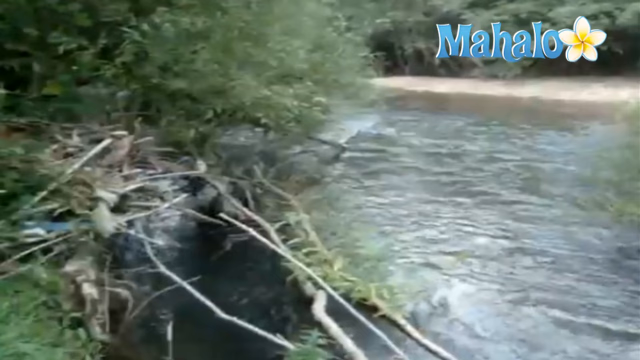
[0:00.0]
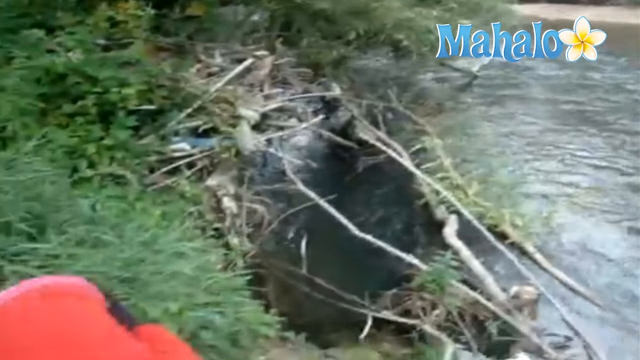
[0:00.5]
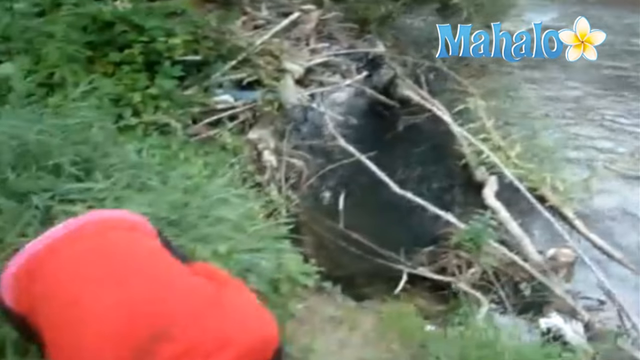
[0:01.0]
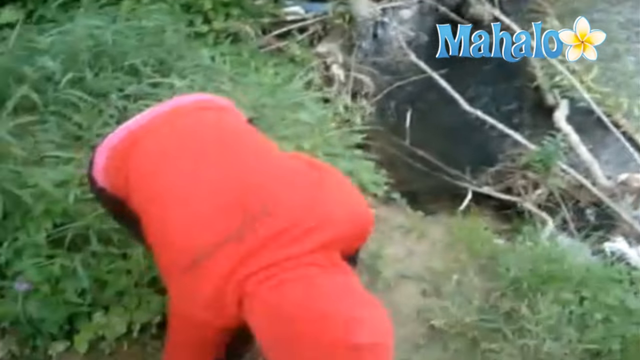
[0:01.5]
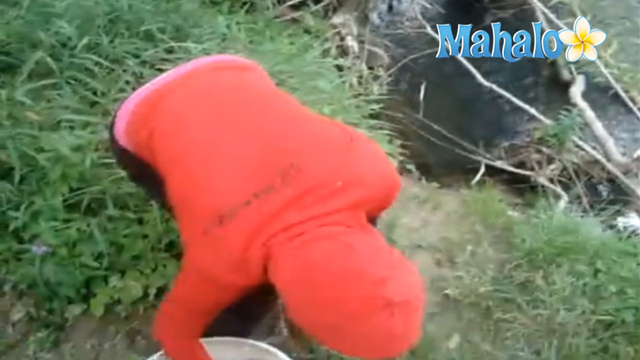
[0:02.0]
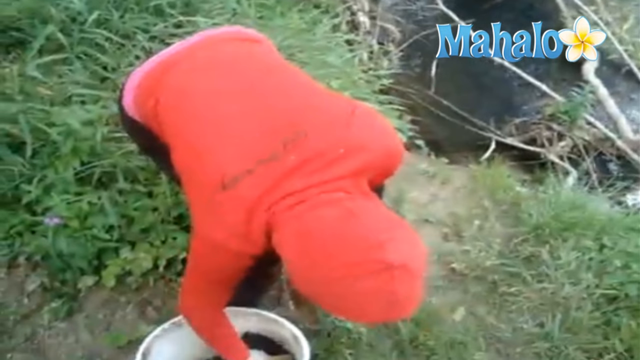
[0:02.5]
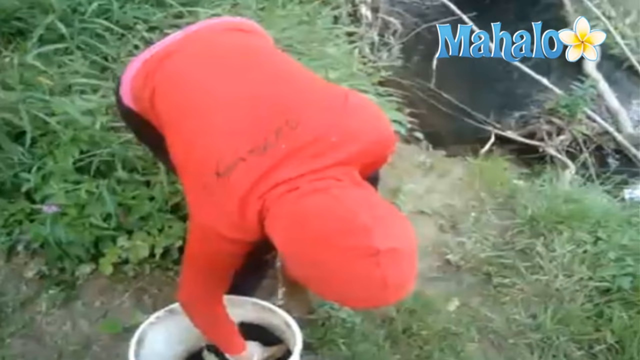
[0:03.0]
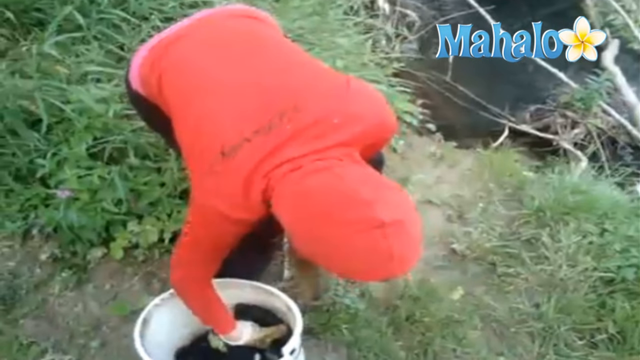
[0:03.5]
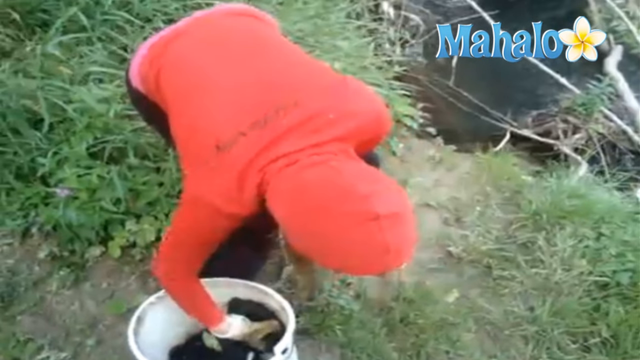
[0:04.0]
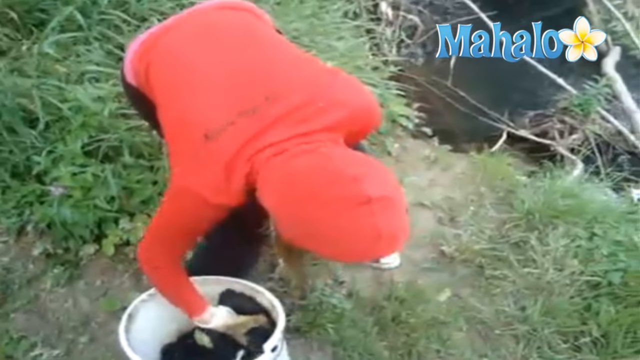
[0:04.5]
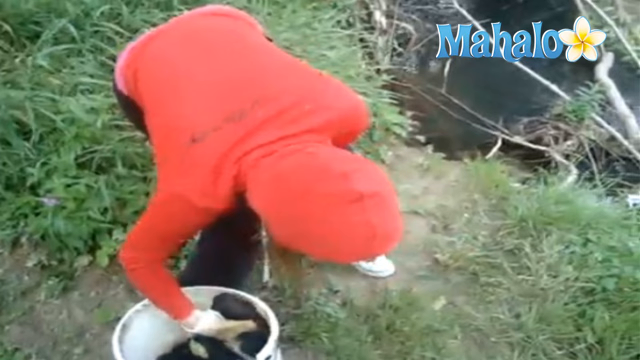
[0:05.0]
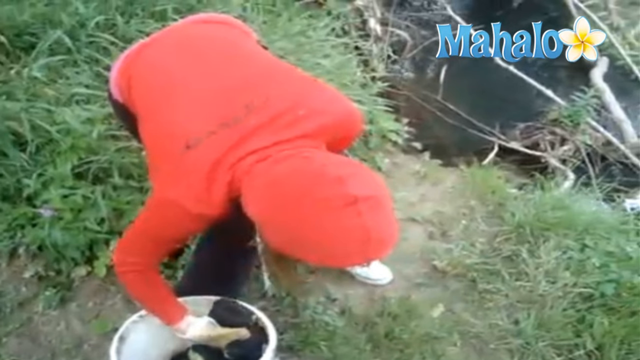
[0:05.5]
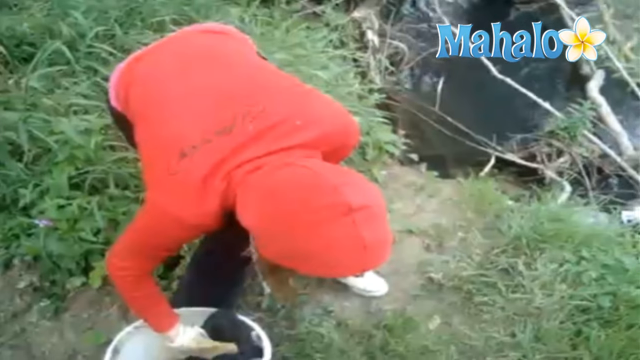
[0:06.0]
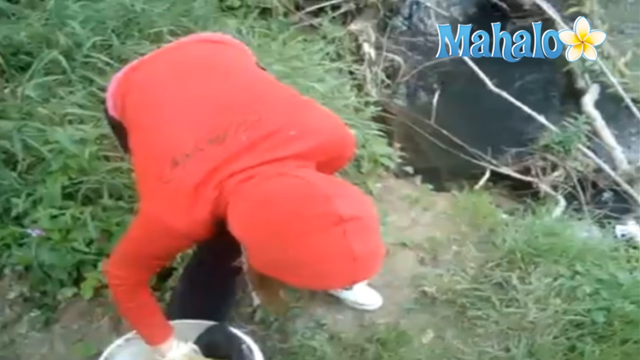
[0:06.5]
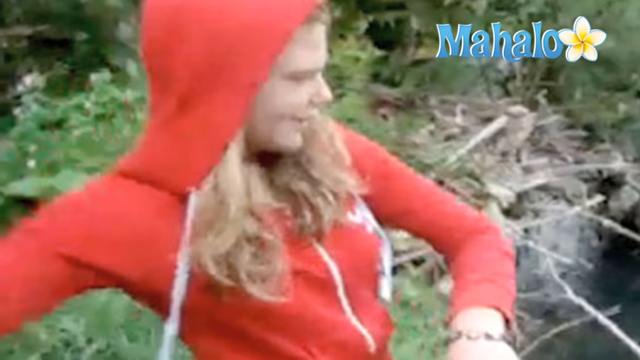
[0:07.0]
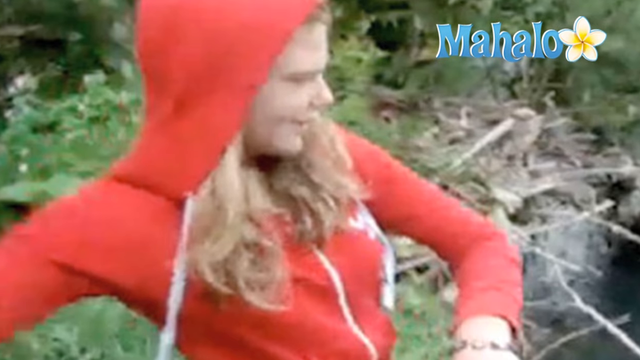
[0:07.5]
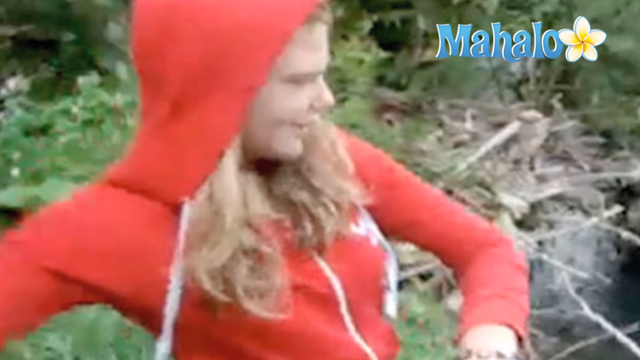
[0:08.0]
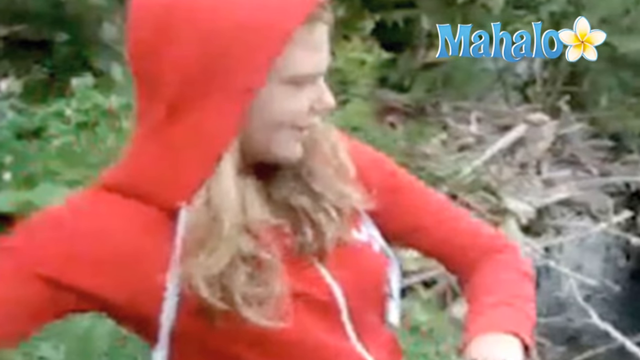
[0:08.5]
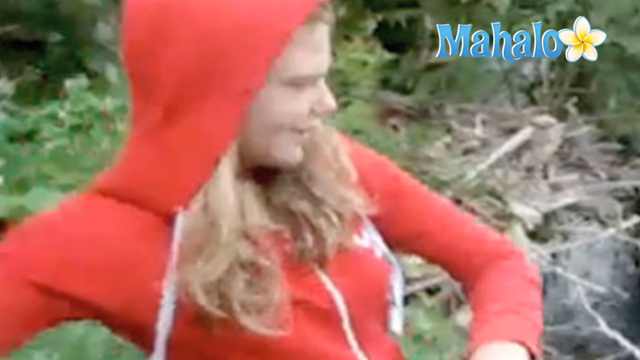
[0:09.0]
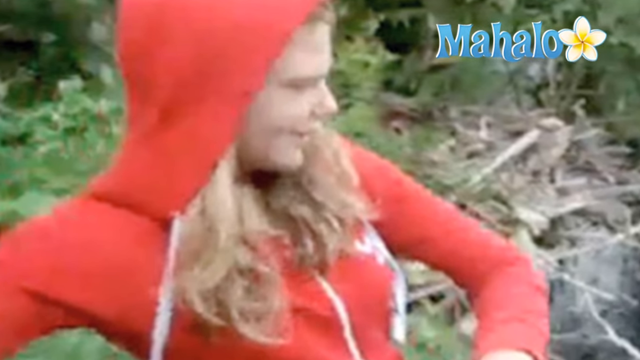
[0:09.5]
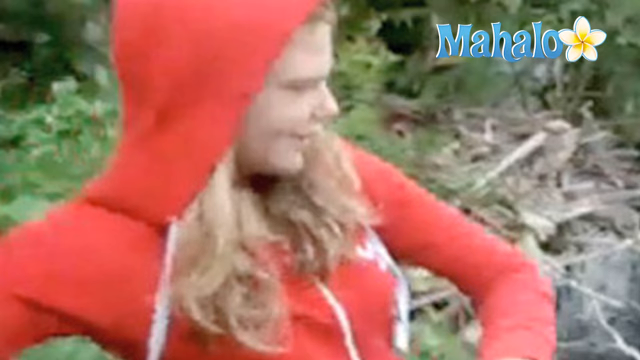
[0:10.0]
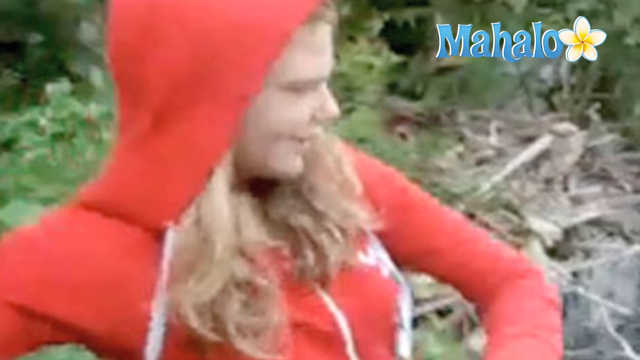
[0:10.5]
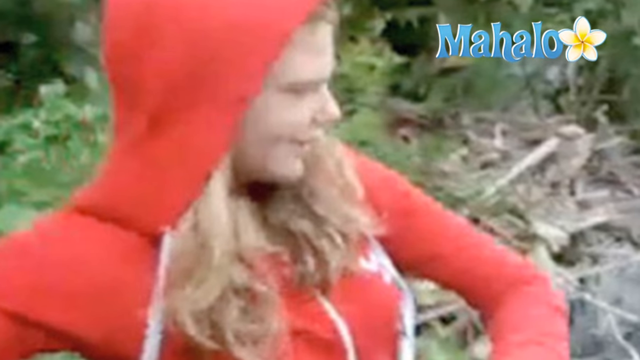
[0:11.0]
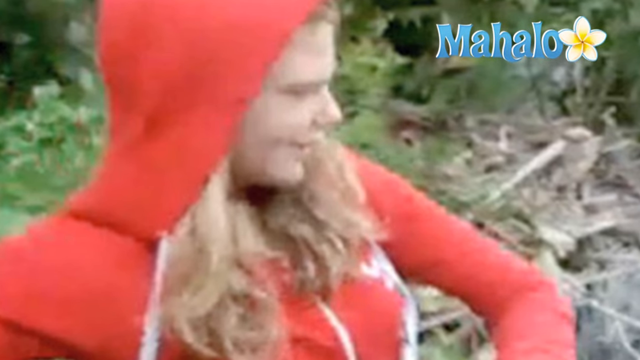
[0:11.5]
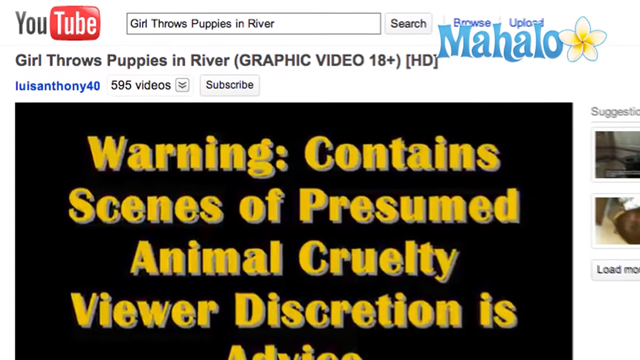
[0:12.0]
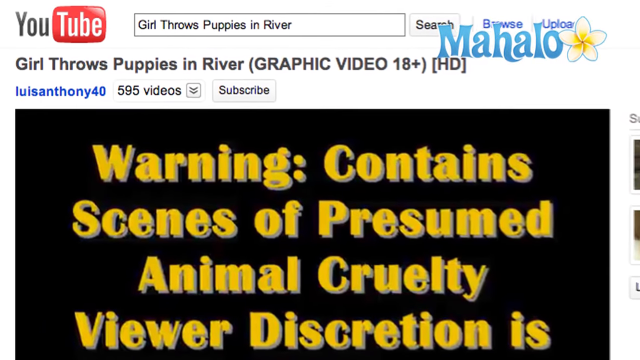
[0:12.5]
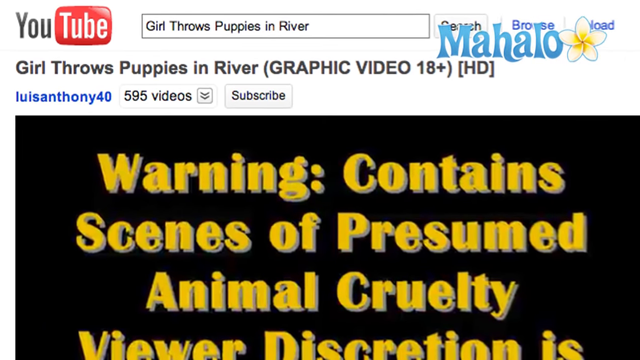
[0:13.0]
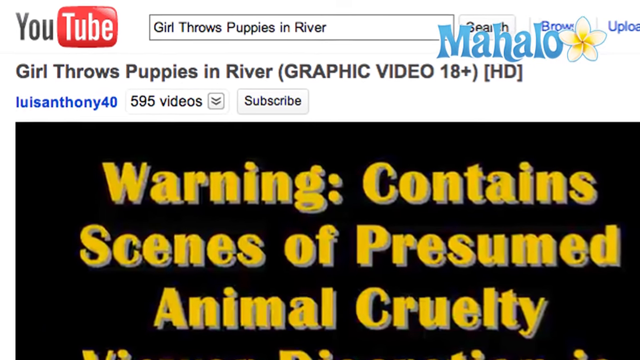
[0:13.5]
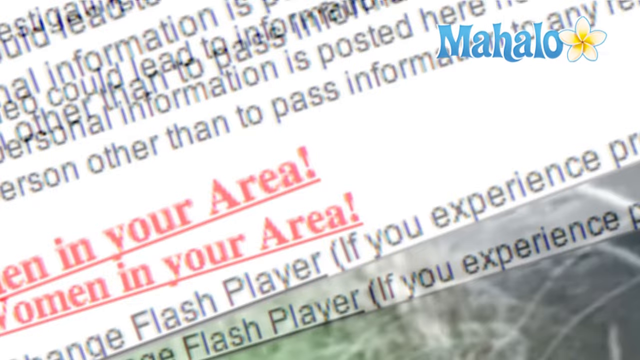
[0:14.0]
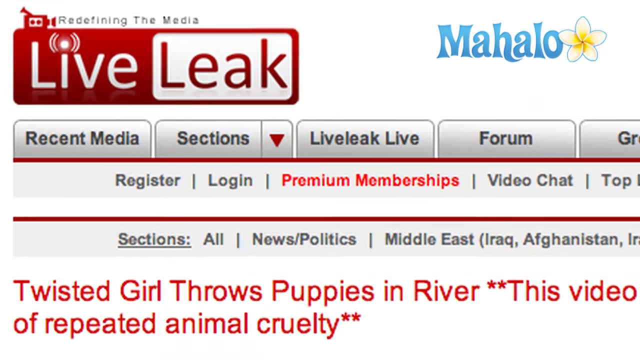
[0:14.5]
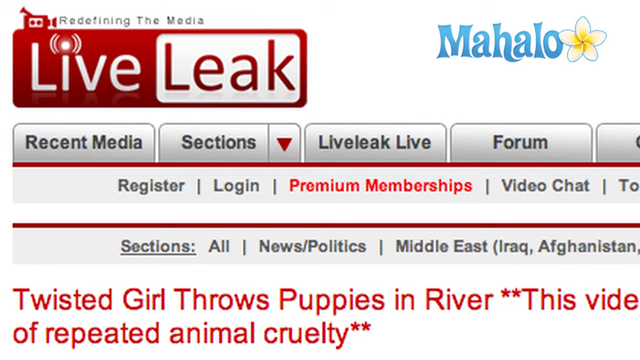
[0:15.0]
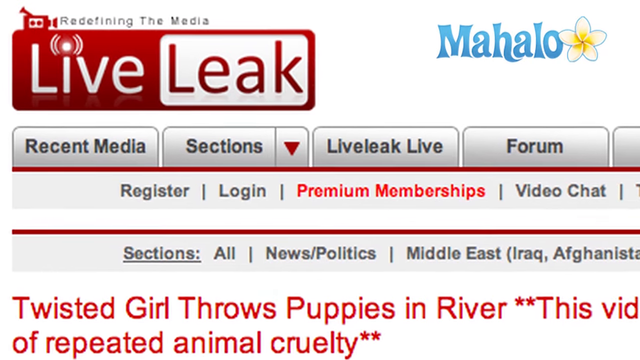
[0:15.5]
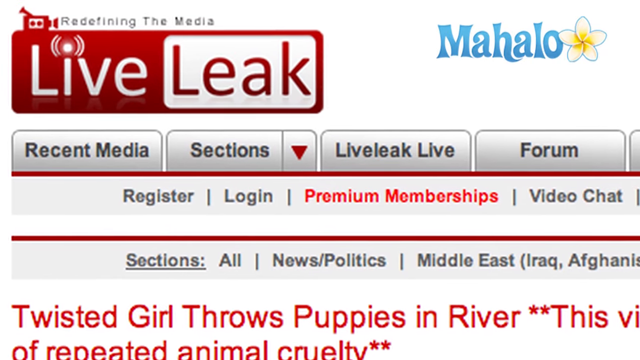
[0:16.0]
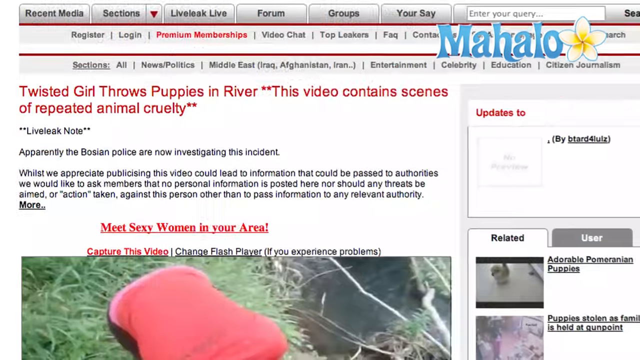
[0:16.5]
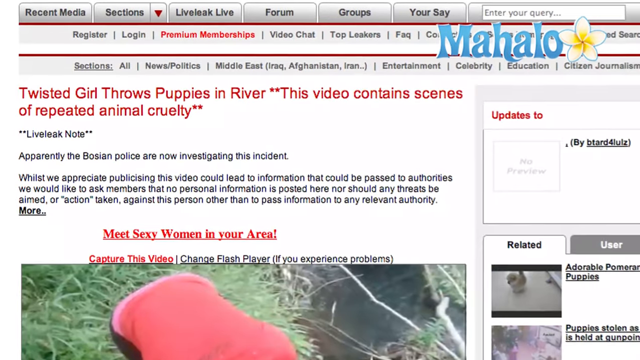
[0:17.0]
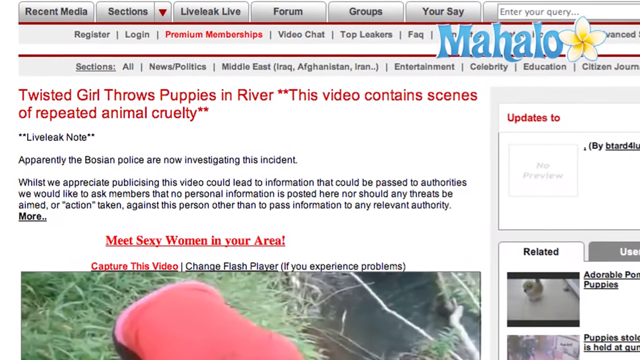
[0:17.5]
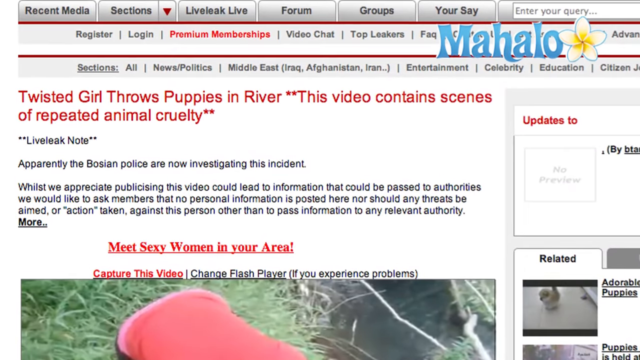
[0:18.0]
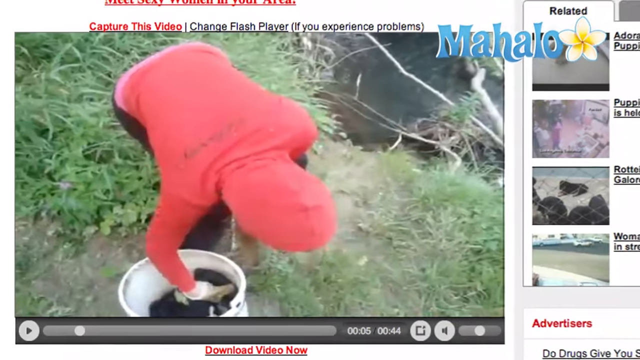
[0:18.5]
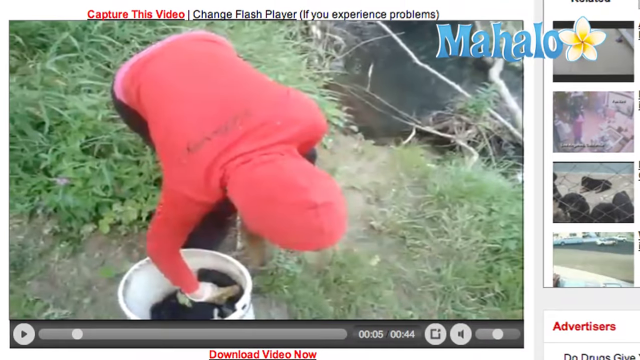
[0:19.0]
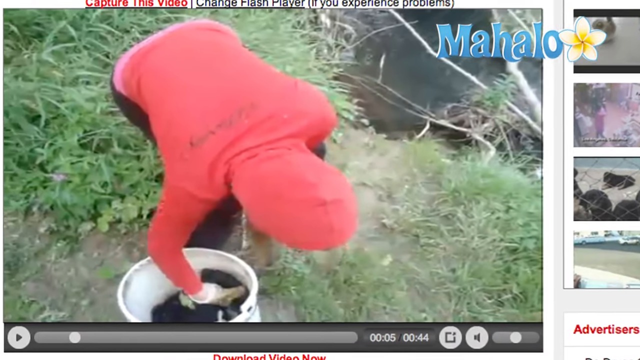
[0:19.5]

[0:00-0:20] There is a lot of grass and what looks like a bush. A girl with long blonde hair wears a red hoodie and white shoes, and she appears to be picking something from a bucket. In the top right corner of the screen is nicely designed text reading "Mahalo" in a modern font, with a yellow and white flower right after the word. Text then reads "Twisted girl throws puppies in the river." The woman puts her hand into the bucket; she appears to be wearing a glove and grabs something that looks black, ready to pull it out of the bucket, apparently a puppy she is about to throw.